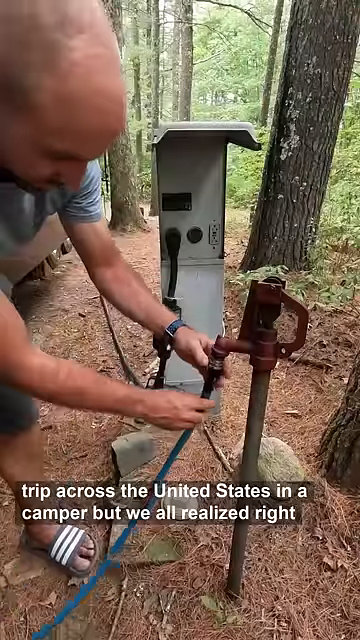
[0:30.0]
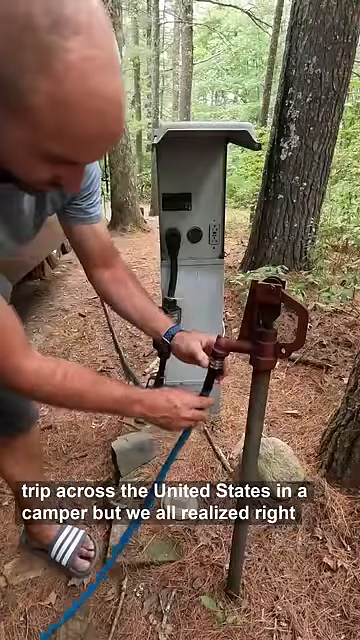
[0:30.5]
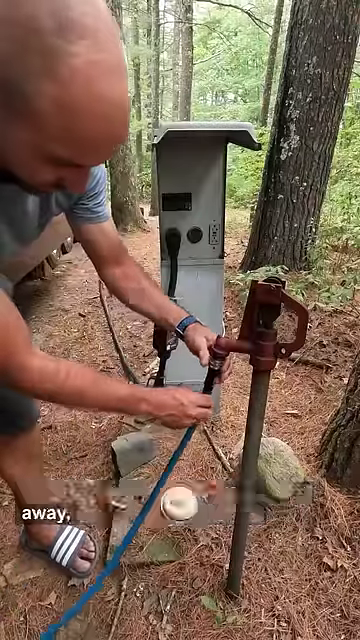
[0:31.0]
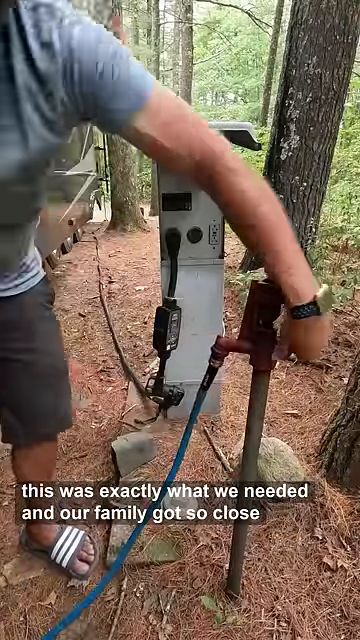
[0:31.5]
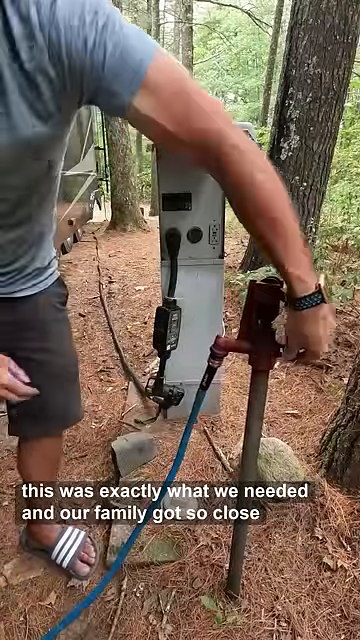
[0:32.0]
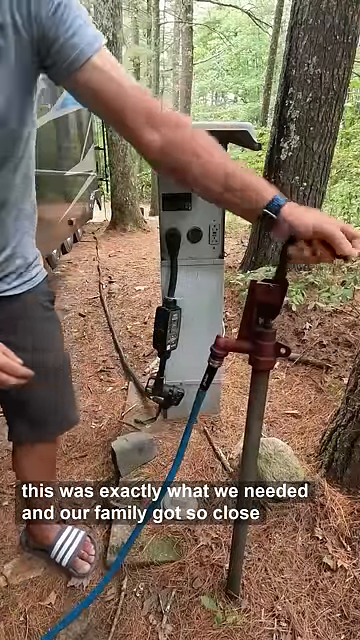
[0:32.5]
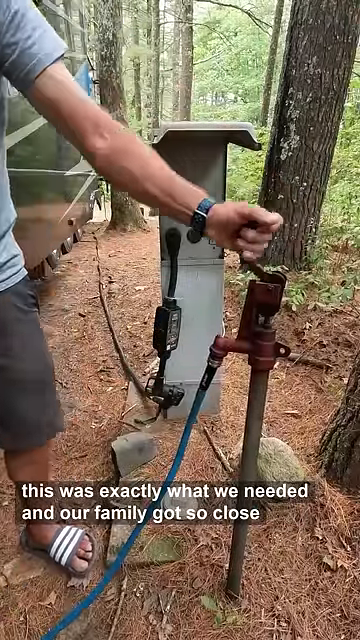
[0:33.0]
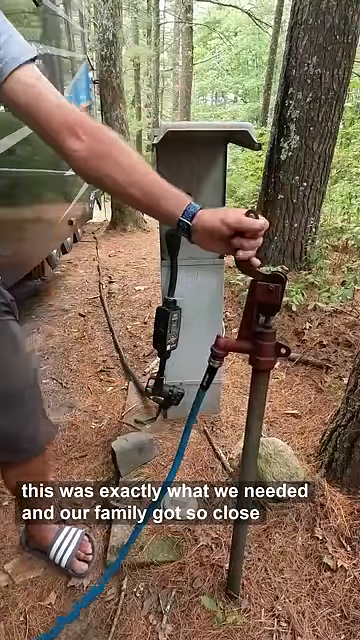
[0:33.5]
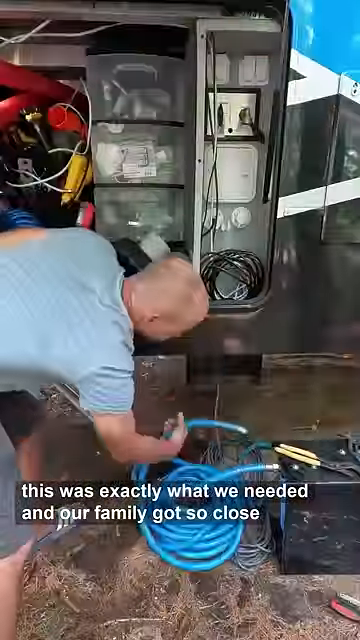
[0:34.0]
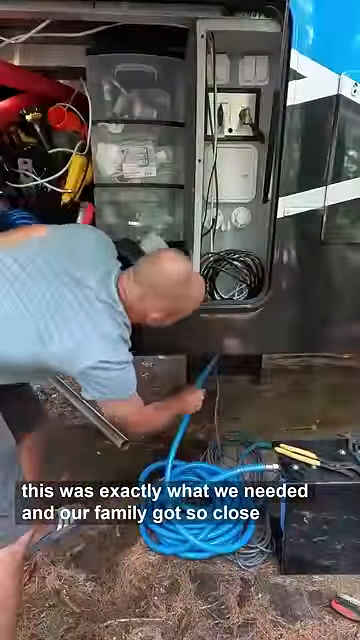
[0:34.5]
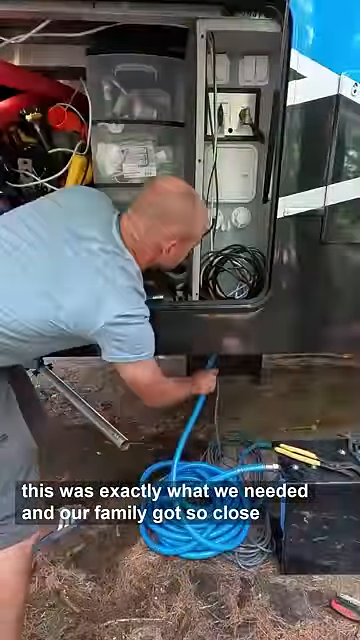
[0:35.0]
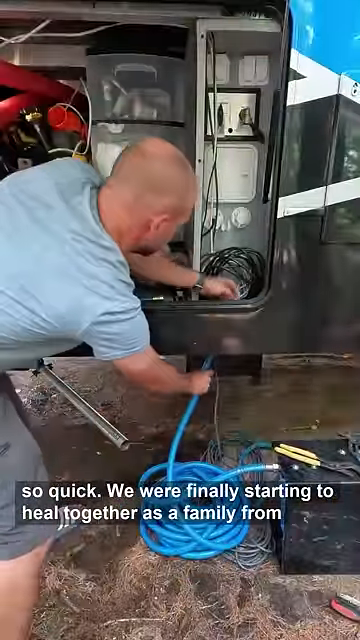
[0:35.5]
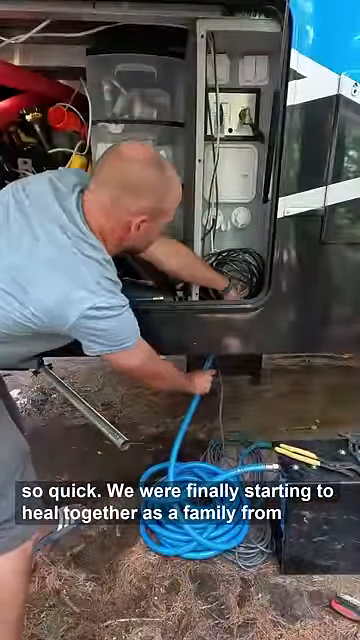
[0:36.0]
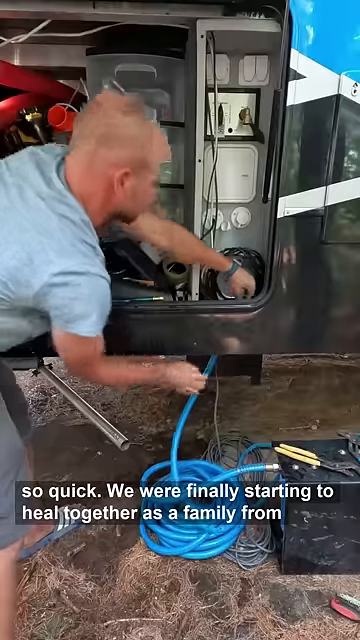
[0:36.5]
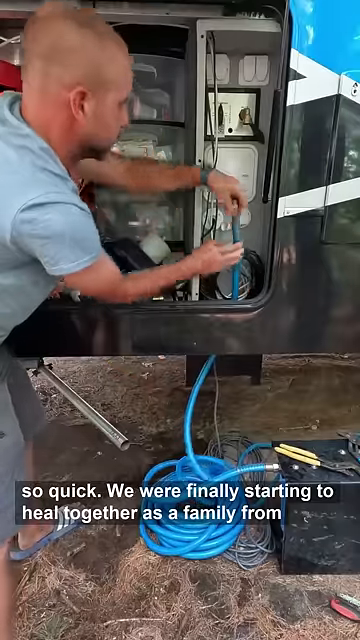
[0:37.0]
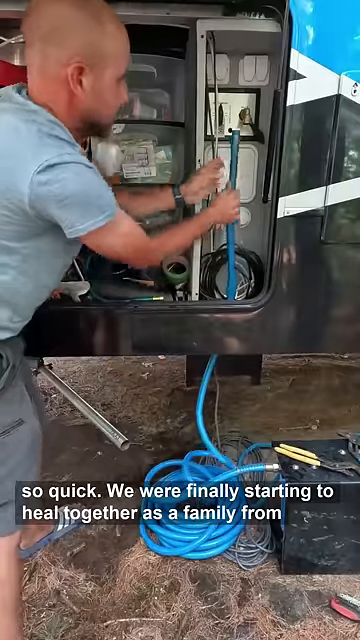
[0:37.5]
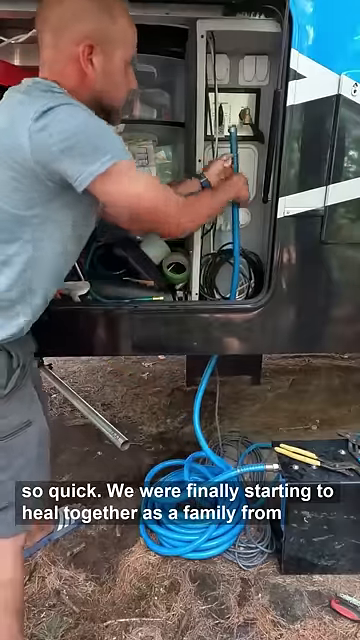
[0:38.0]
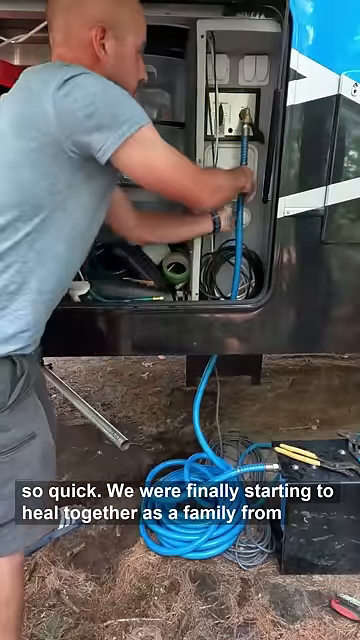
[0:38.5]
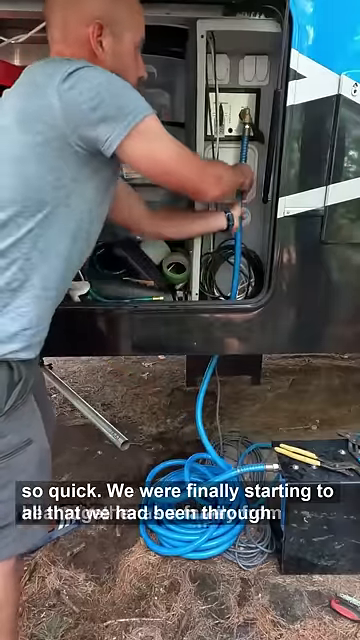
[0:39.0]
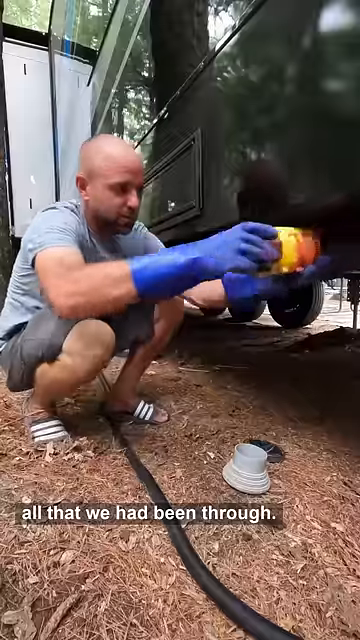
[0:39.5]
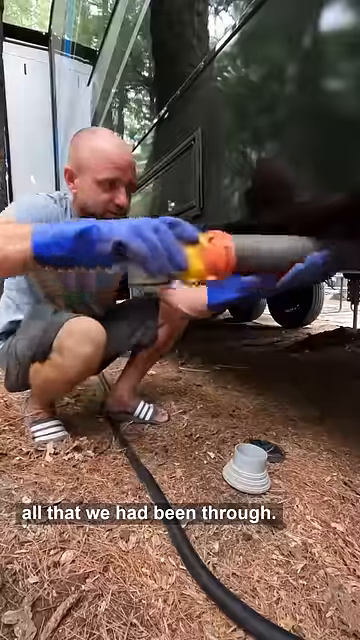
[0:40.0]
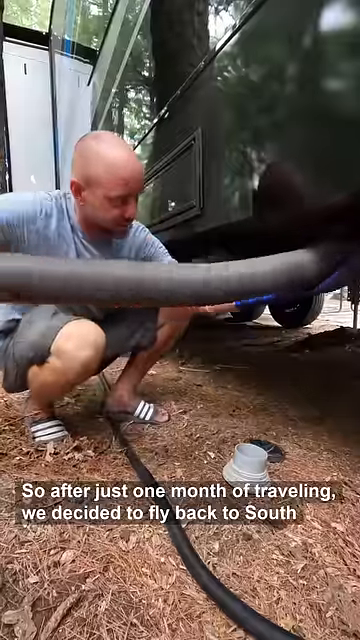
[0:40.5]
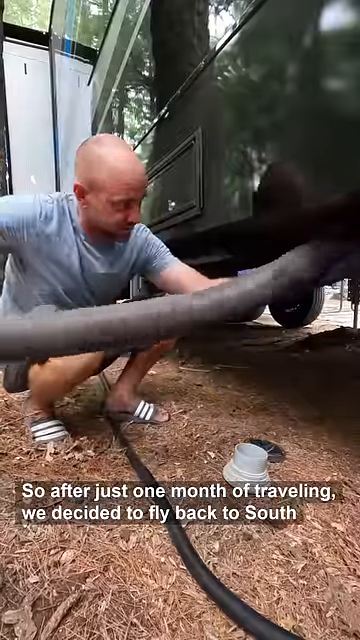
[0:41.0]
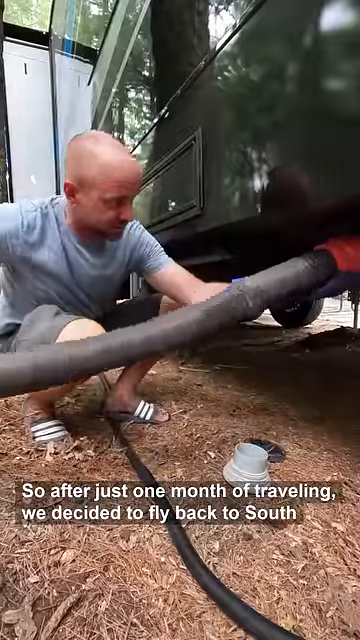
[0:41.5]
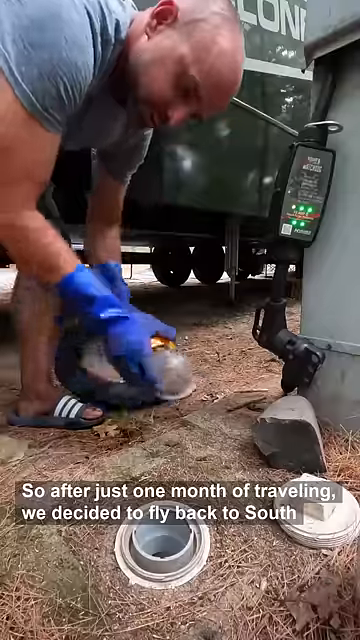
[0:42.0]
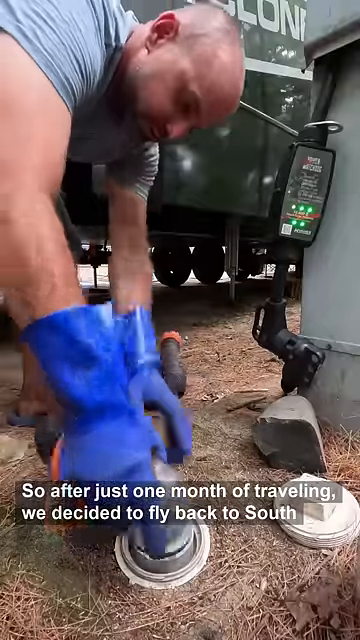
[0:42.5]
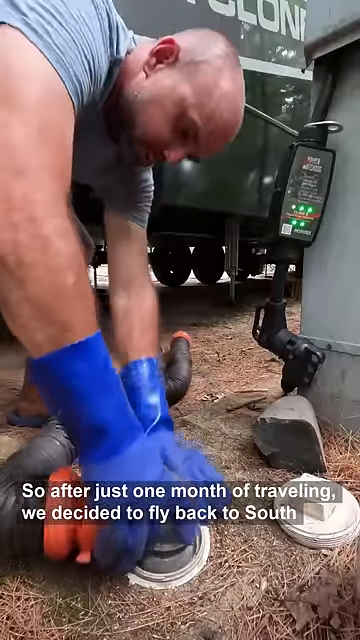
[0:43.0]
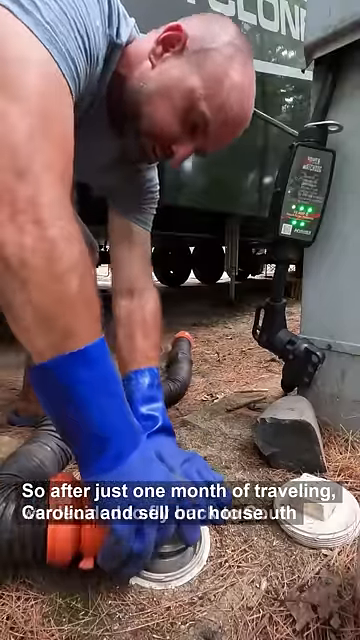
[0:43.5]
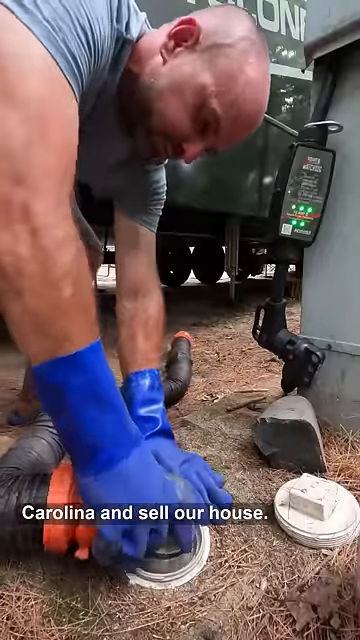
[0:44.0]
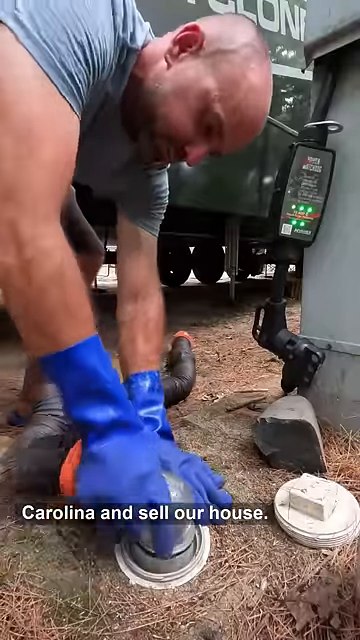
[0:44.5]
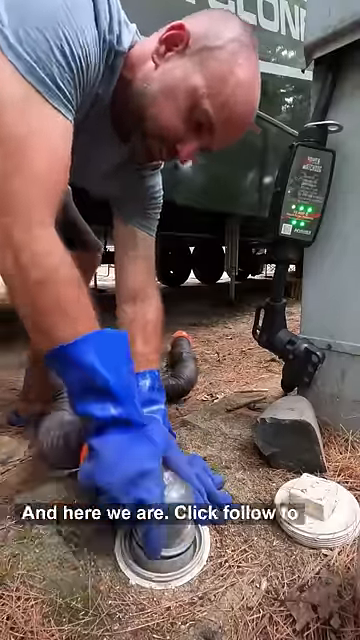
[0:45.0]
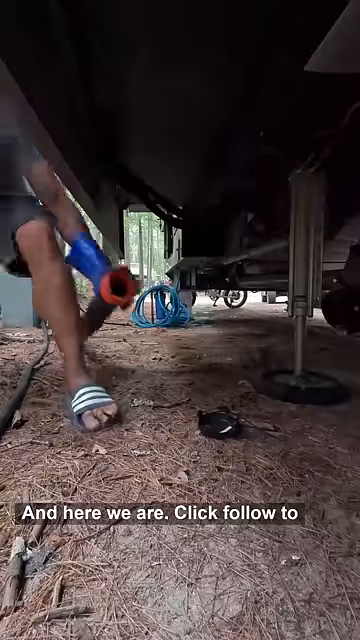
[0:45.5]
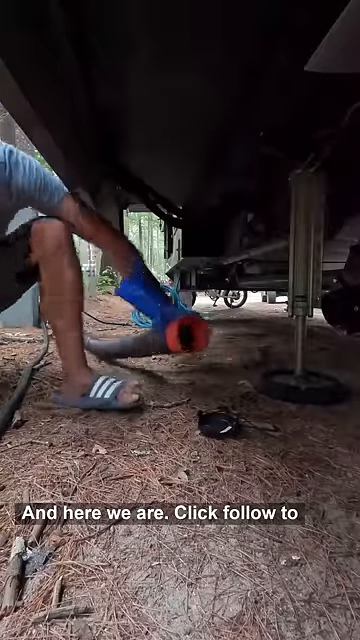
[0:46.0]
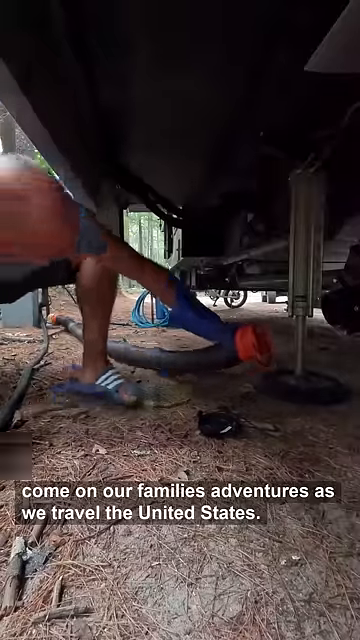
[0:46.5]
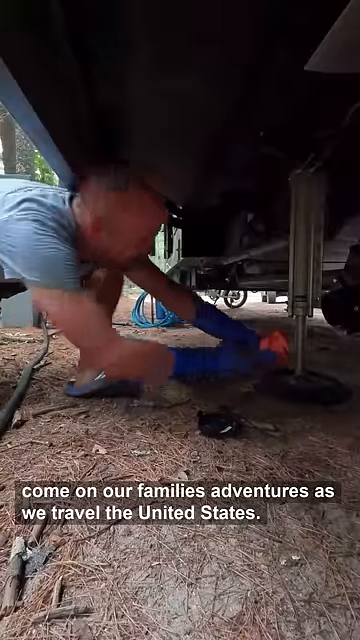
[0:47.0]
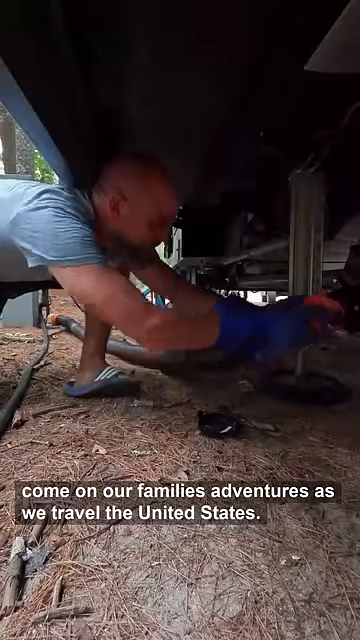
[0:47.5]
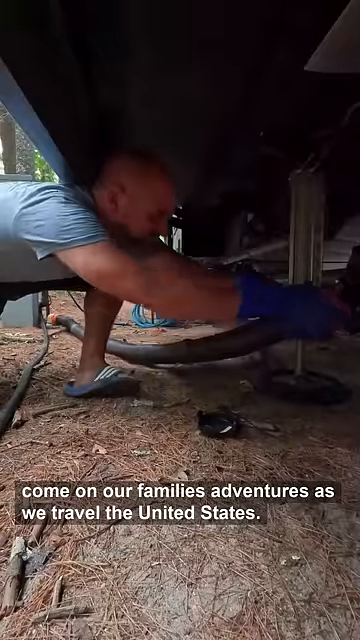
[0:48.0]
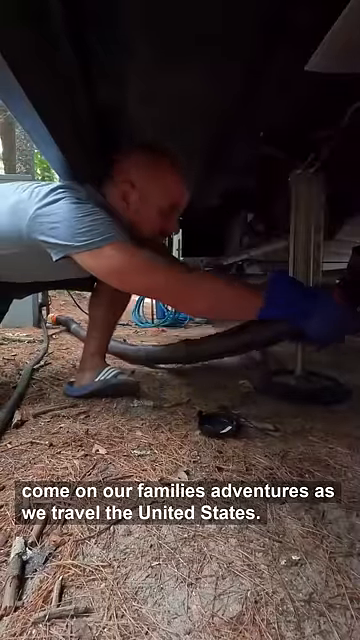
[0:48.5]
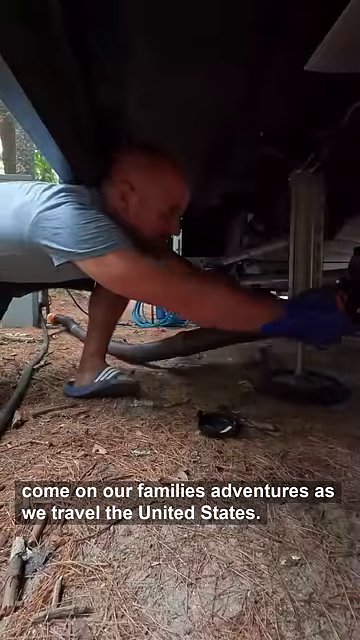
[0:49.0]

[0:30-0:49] After the man hooks the water hose up to the park's supply, he goes back and hooks the other end of the hose up to the RV. He then pulls out some sort of tubing and hooks it up to the ground; it is the sewage system. He is now wearing heavy blue rubber gloves. He hooks the sewage tube up to the RV's waste disposal section from underneath the RV. The couple is setting up their fully equipped RV in the RV park, a sunny, wooded area with trees, where there is supply for water, electricity and waste disposal.